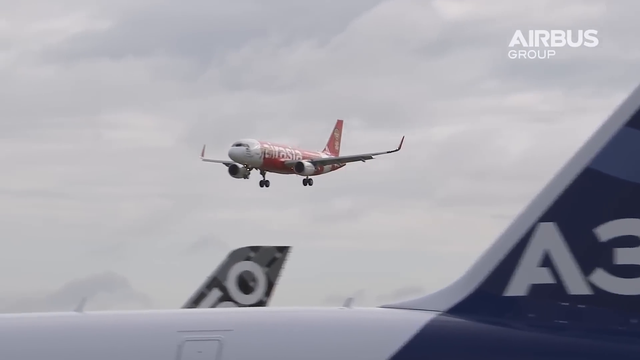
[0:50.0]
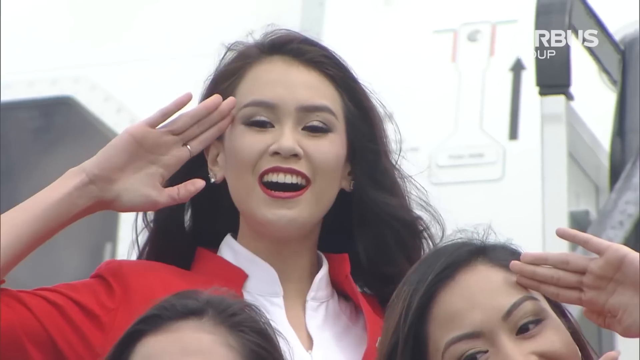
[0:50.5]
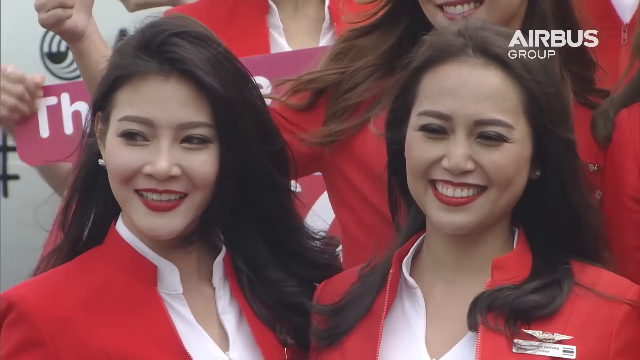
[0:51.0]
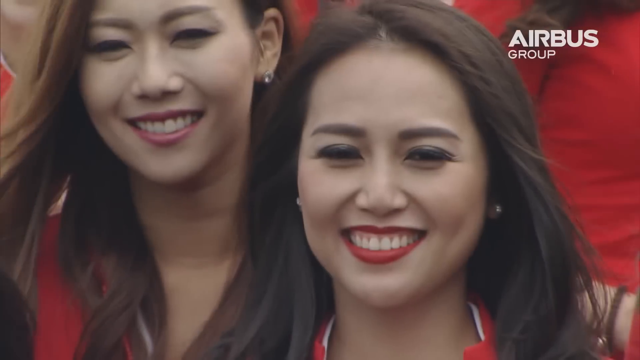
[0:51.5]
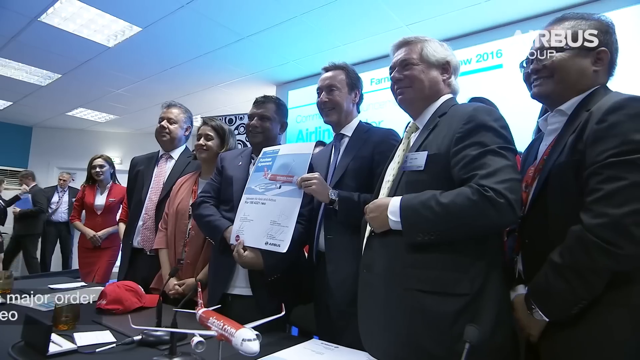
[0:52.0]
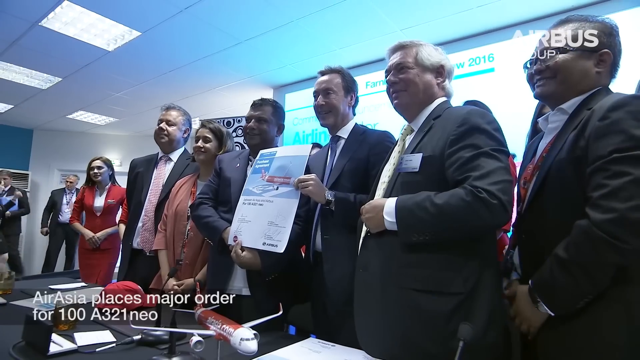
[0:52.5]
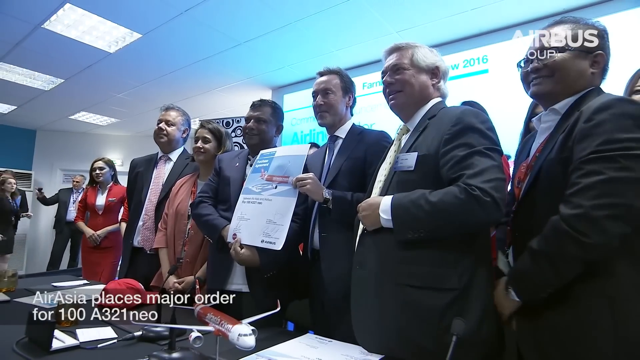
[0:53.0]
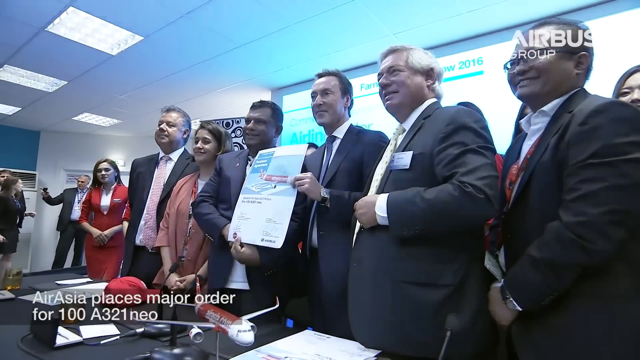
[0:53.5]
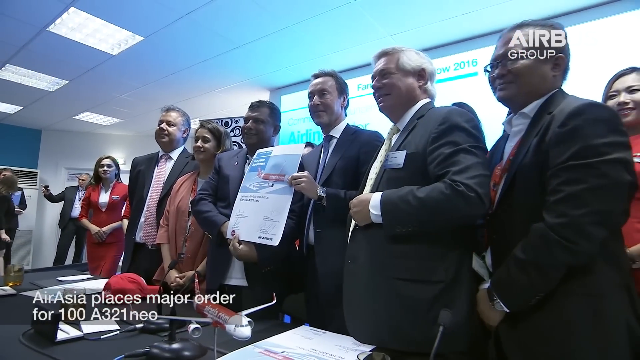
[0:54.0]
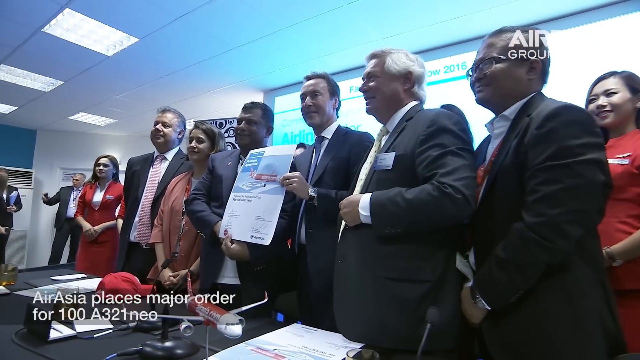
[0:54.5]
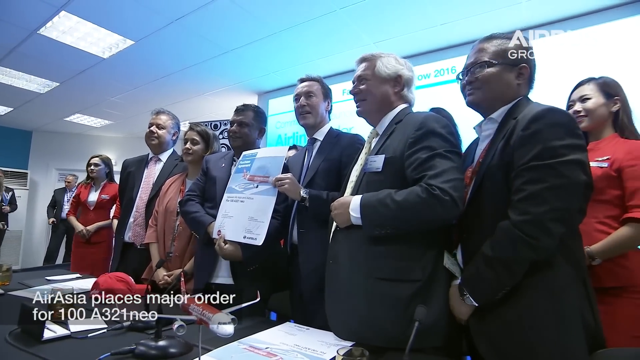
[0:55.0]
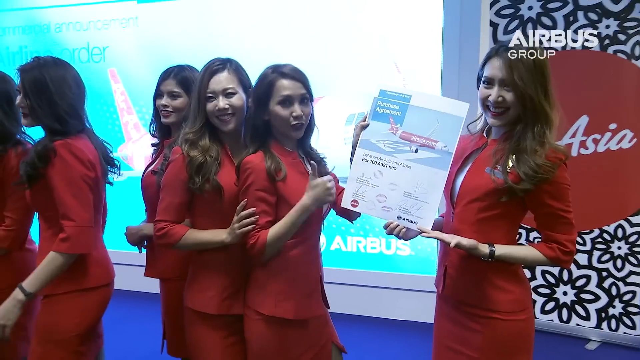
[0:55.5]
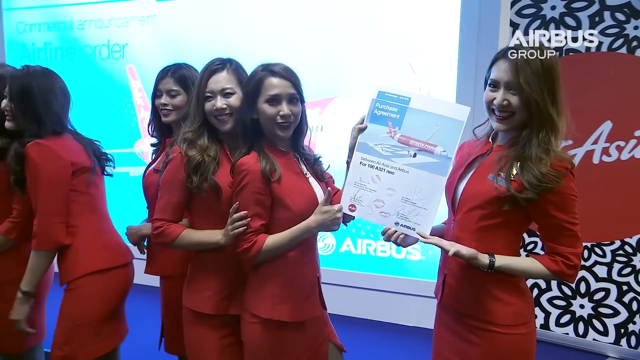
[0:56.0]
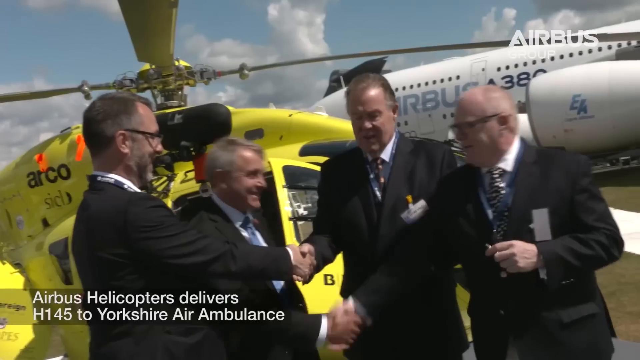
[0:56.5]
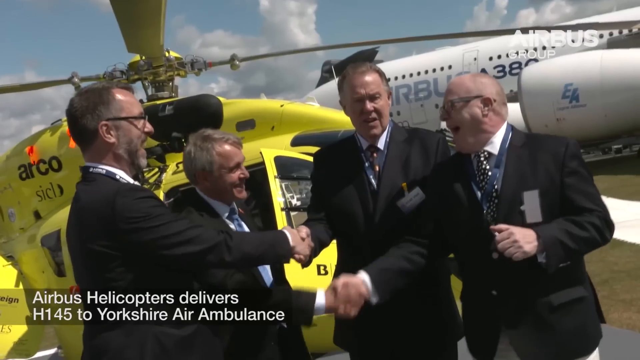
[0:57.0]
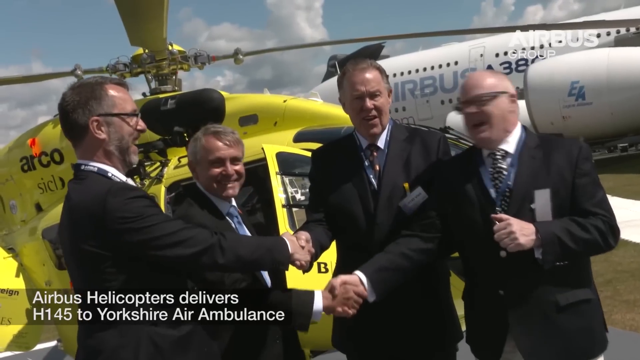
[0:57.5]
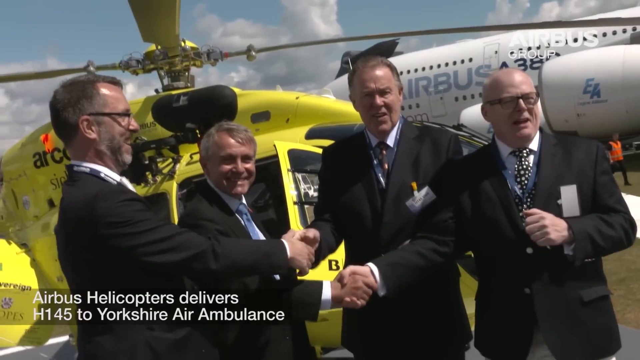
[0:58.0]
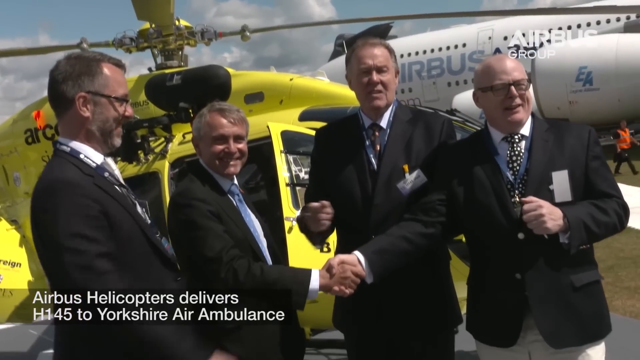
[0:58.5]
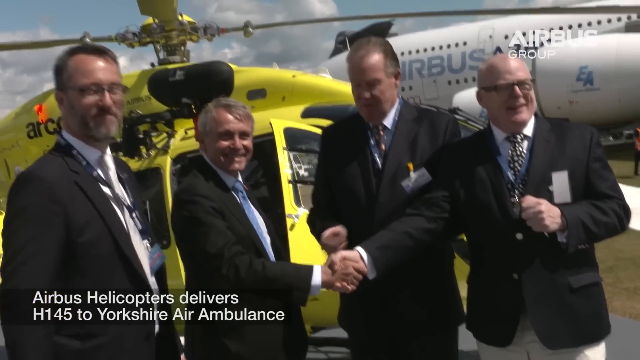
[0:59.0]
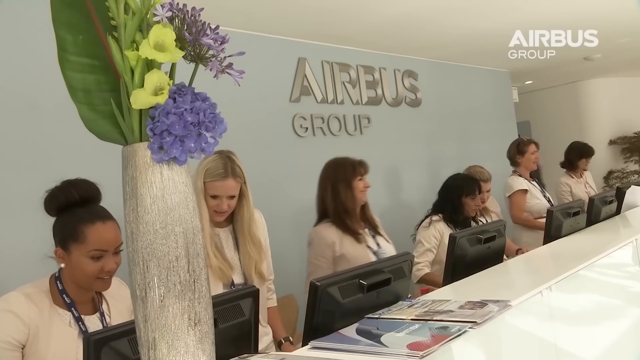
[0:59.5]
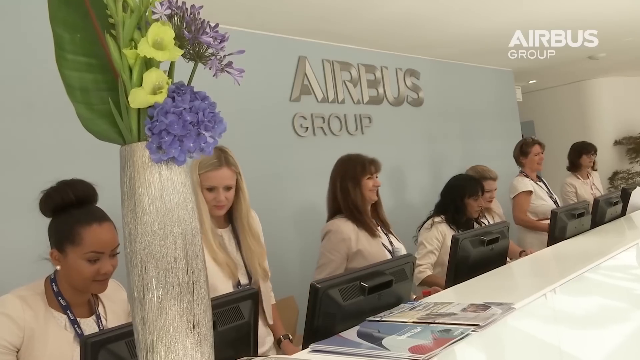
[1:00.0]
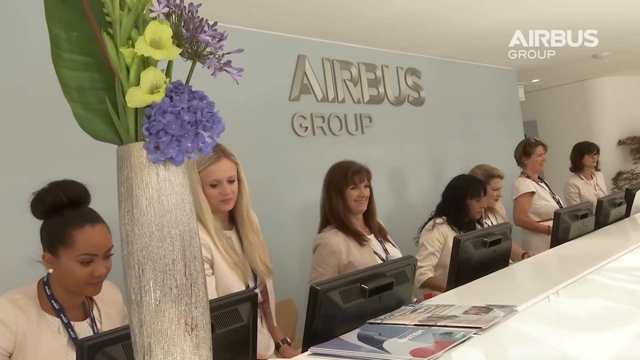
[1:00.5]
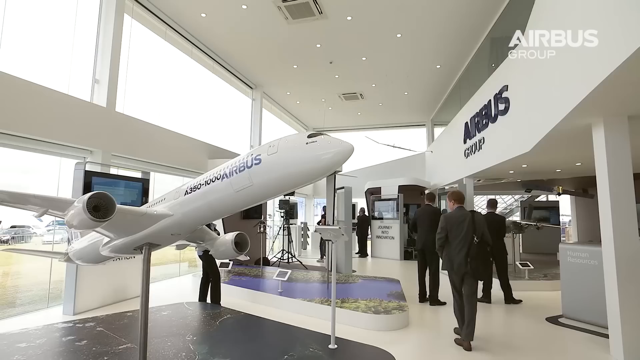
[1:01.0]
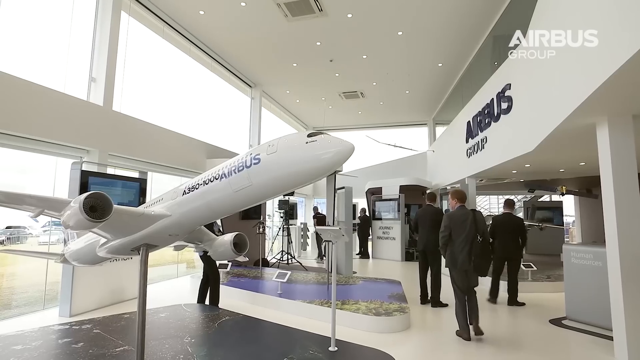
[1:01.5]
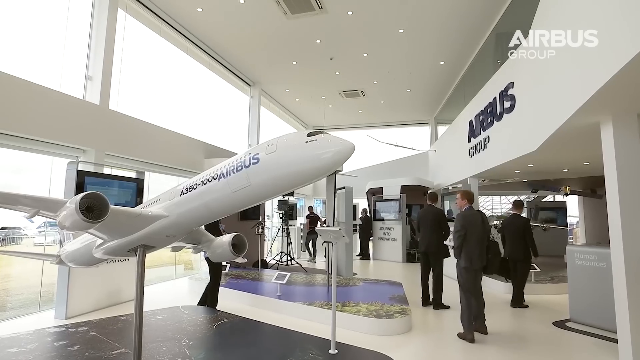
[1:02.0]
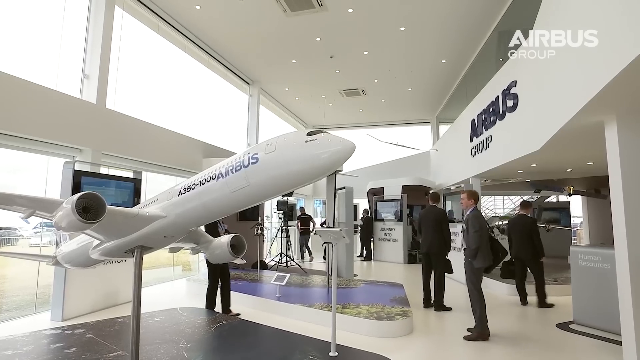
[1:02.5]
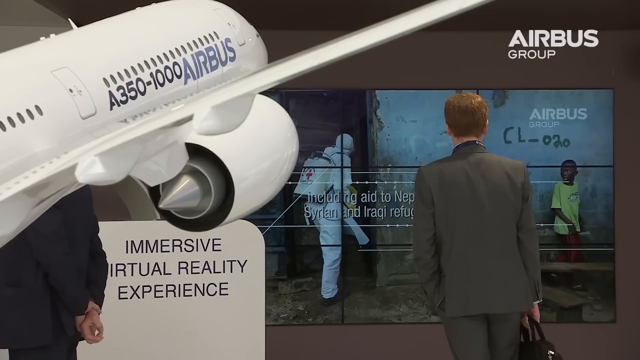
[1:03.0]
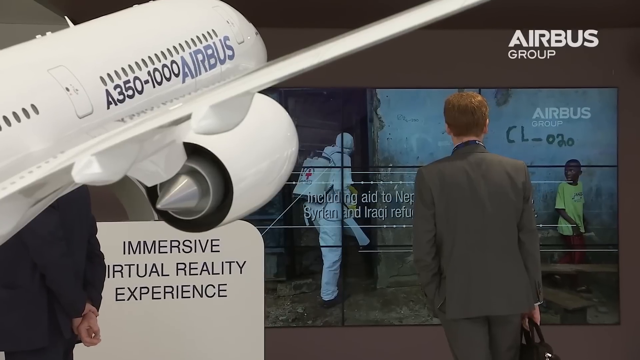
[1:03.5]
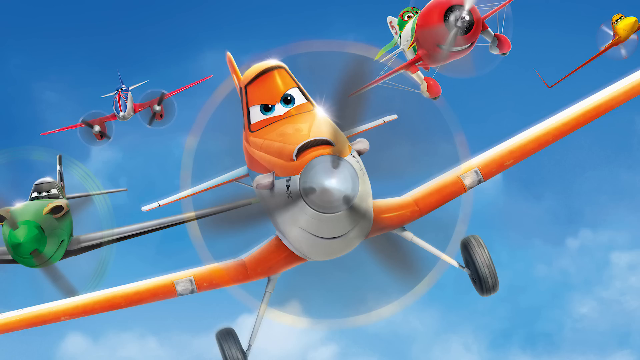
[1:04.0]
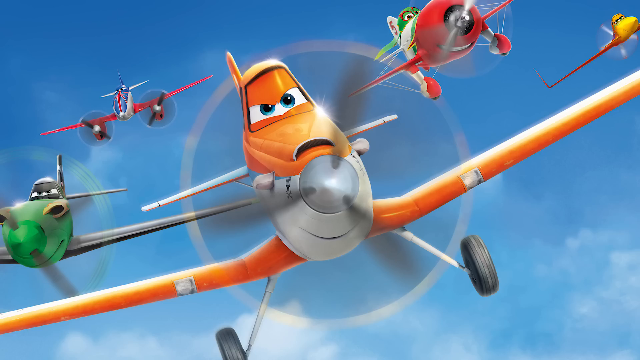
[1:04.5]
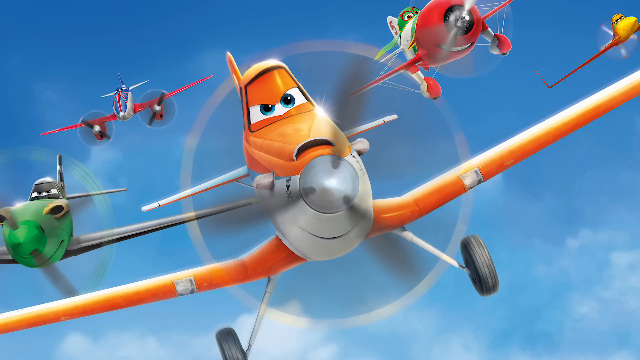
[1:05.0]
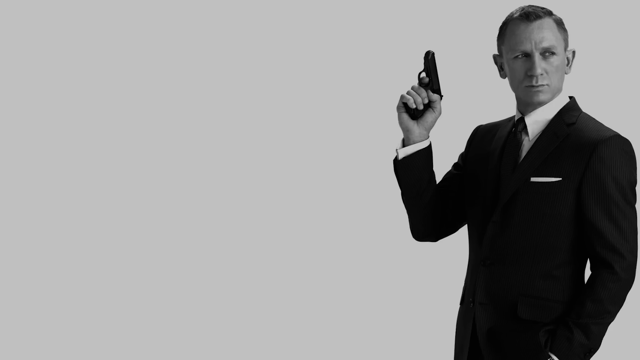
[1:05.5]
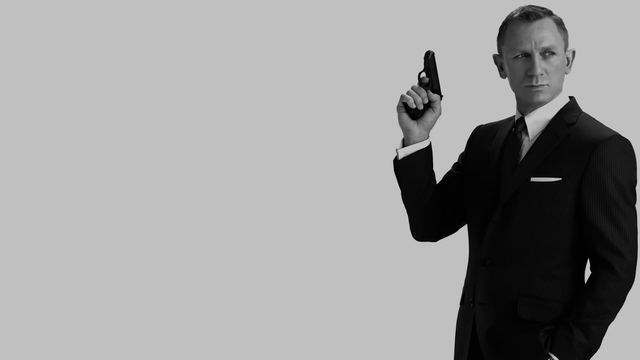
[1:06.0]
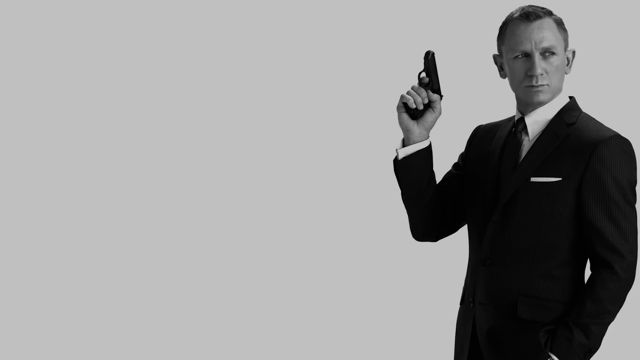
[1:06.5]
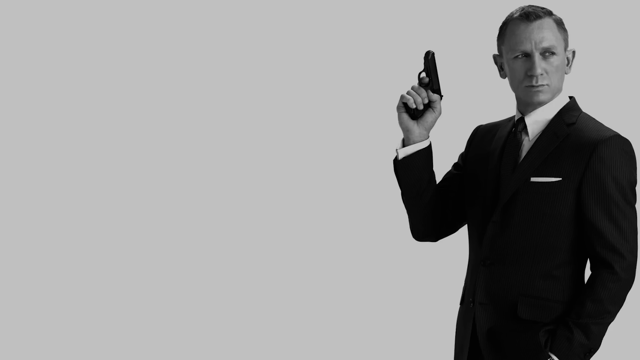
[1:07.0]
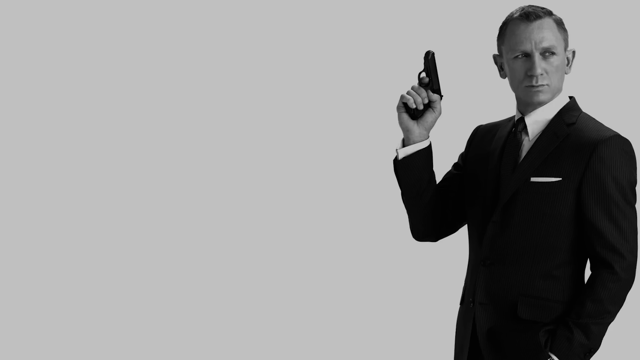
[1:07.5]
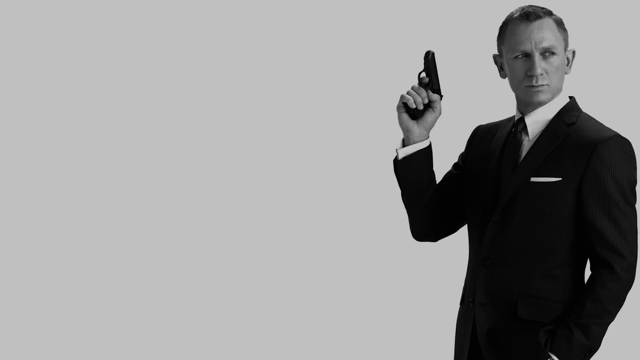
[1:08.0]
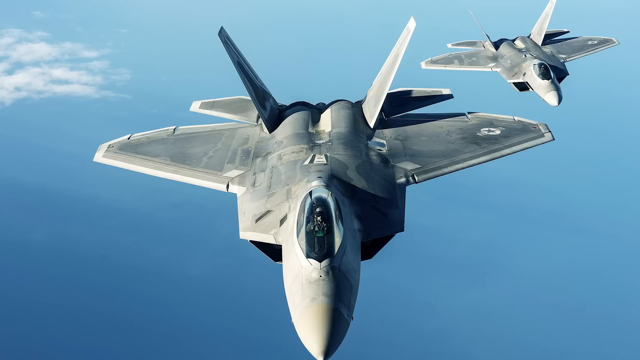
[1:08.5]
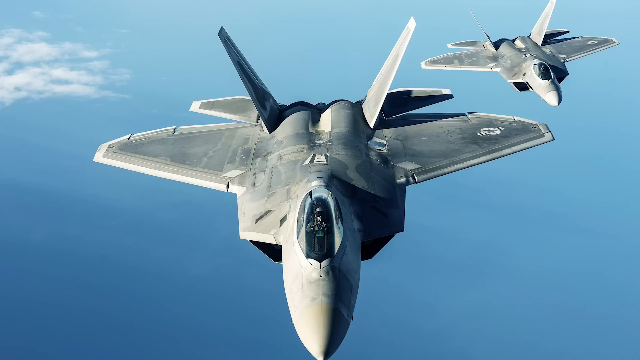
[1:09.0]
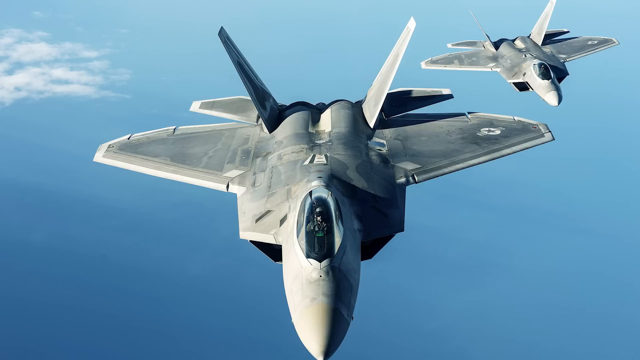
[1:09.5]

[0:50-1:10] The AirAsia plane is on approach. Next, smiling women in red uniforms are shown, then a group of people who seem to be smiling, with the man in the center holding a paper bearing a picture of the AirAsia plane. The video cuts to the smiling ladies, presumably flight attendants, also holding a paper with a picture of the AirAsia plane. Four men shake hands, with a helicopter and an Airbus A380 behind them. The video then cuts to what looks like the Airbus Group lobby, where an A380 Airbus model is prominently on display. A scene from the movie Plane follows, with cartoon planes flying, then James Bond holding a gun in his right hand, standing on the right of the screen. The video then shows two fighter jets.